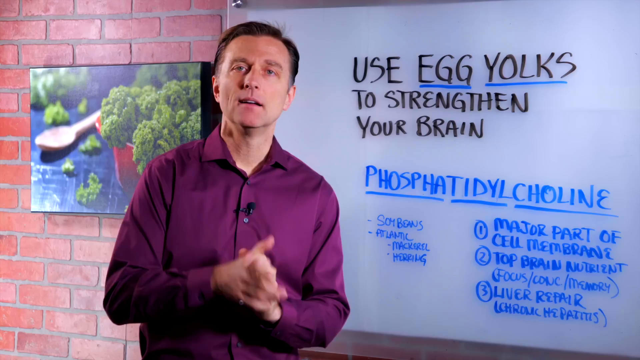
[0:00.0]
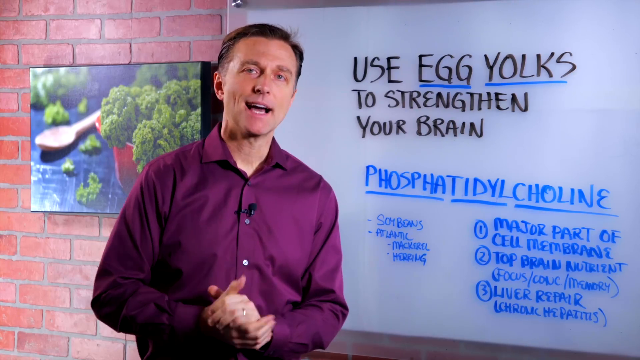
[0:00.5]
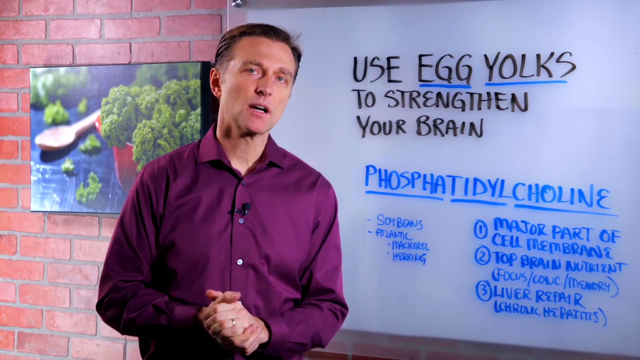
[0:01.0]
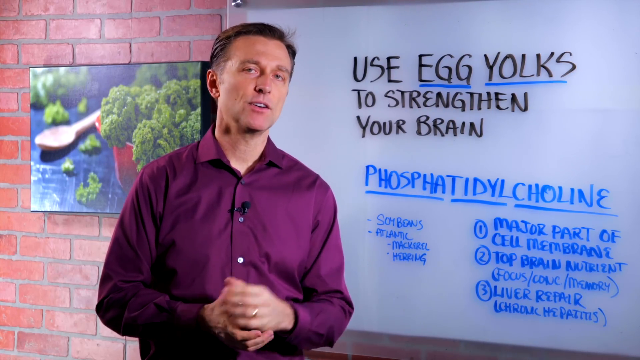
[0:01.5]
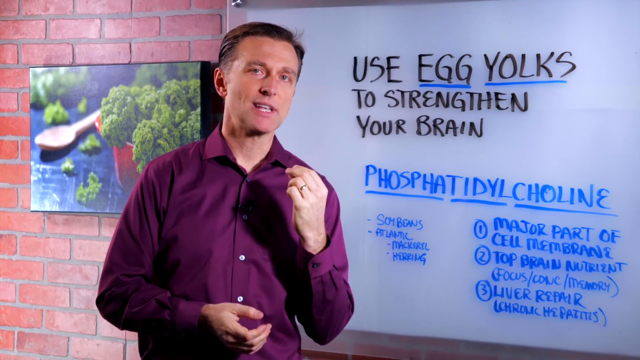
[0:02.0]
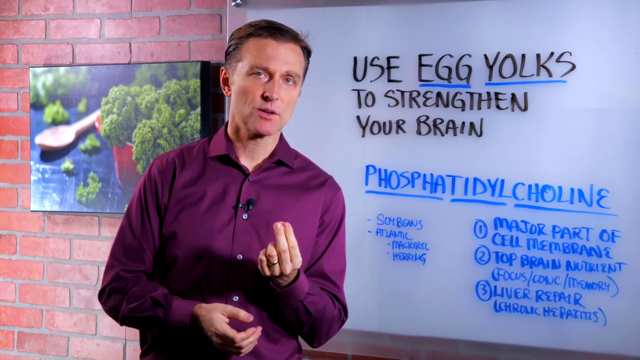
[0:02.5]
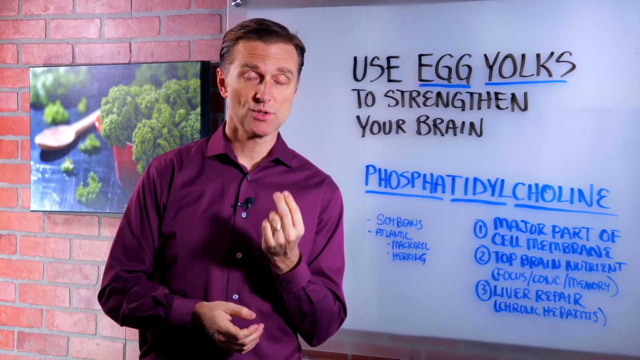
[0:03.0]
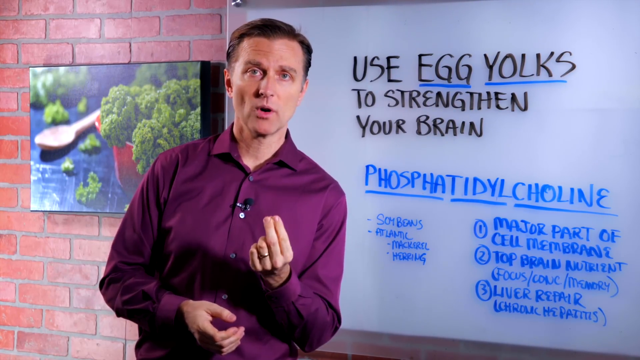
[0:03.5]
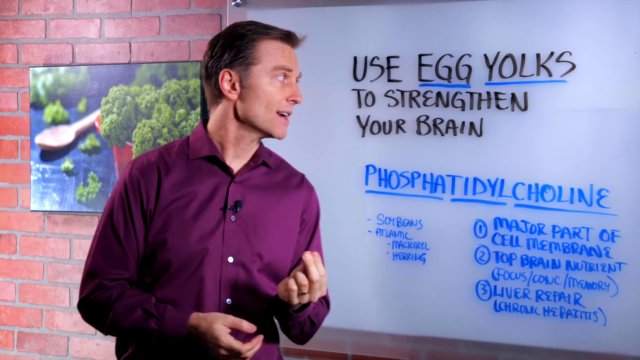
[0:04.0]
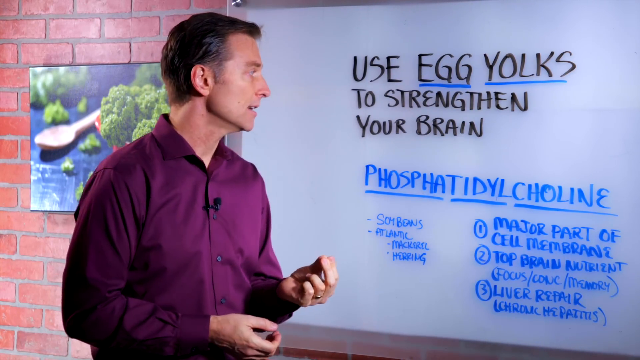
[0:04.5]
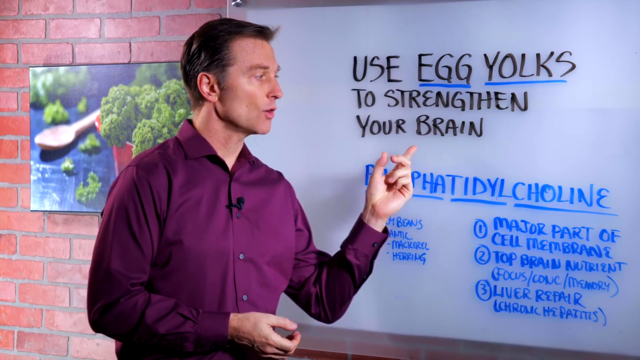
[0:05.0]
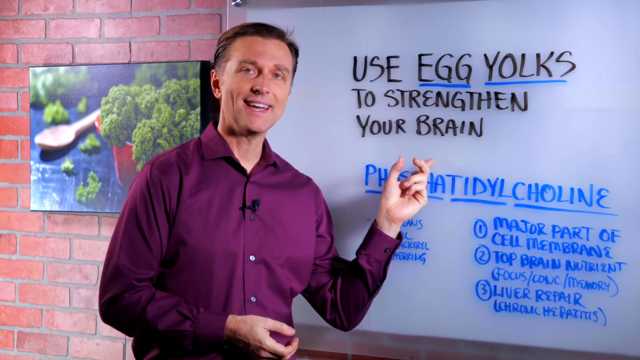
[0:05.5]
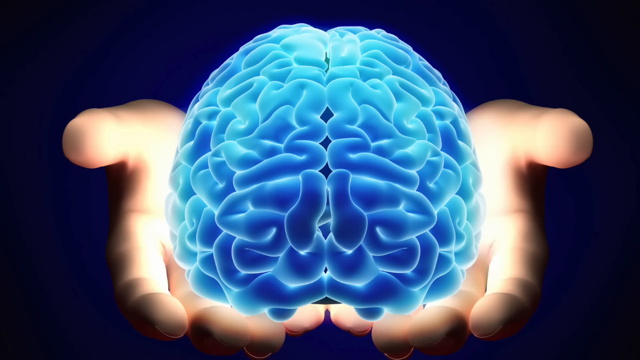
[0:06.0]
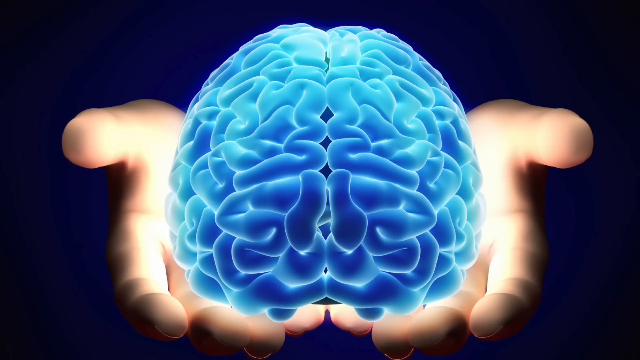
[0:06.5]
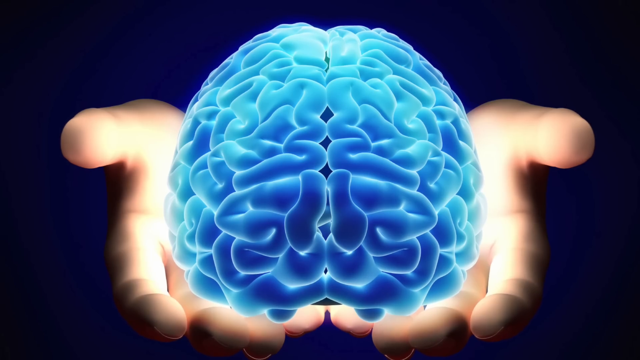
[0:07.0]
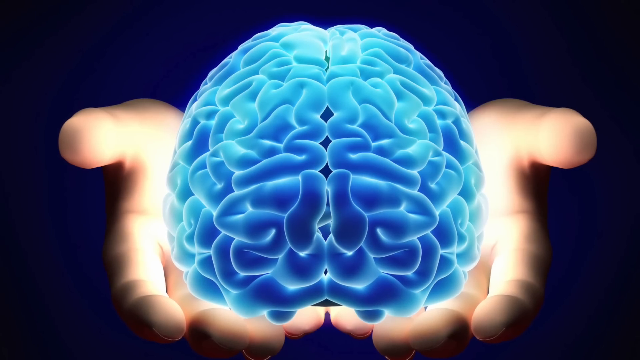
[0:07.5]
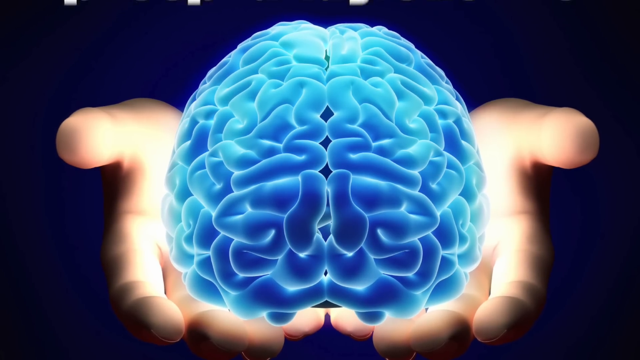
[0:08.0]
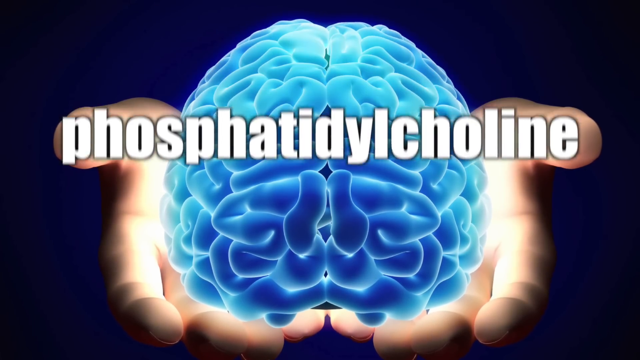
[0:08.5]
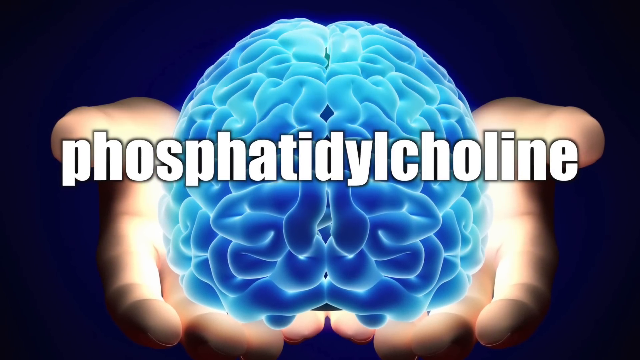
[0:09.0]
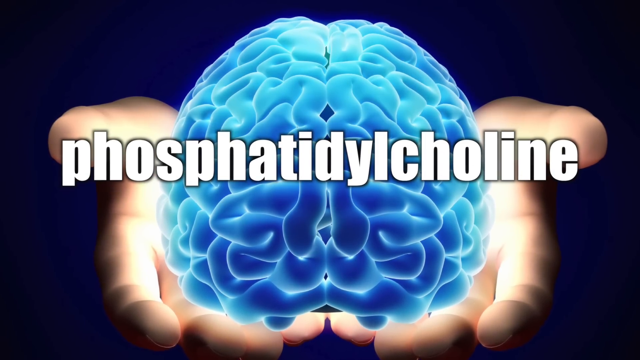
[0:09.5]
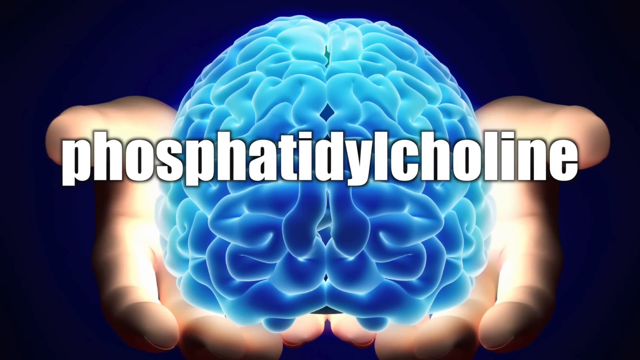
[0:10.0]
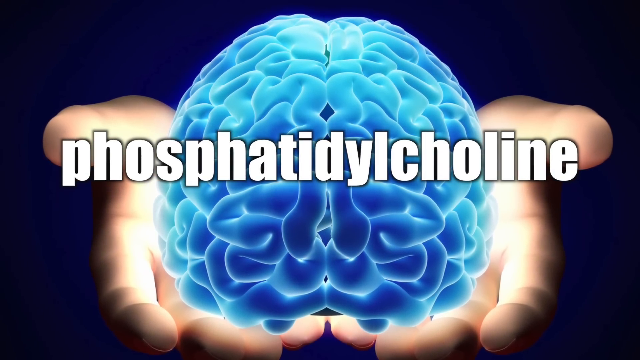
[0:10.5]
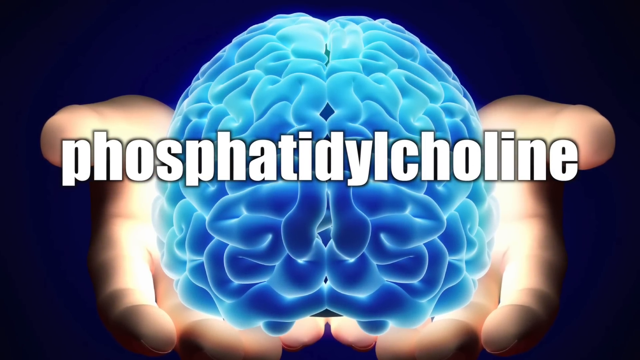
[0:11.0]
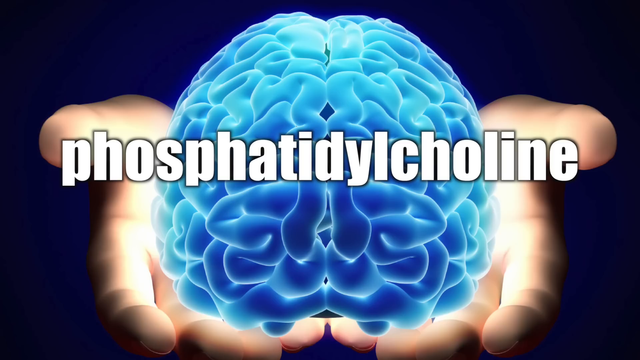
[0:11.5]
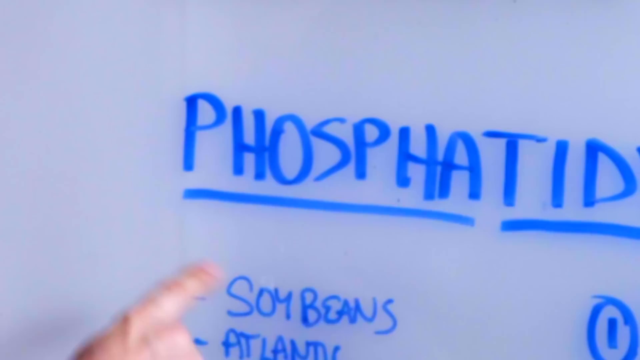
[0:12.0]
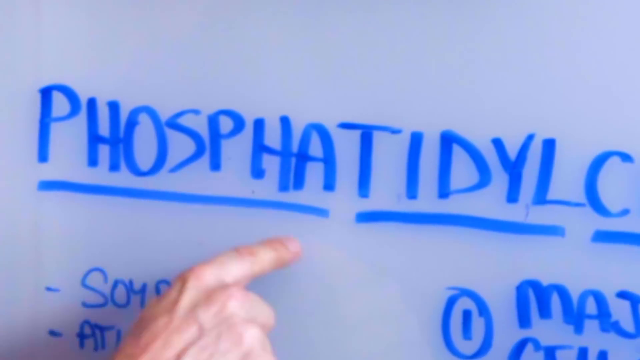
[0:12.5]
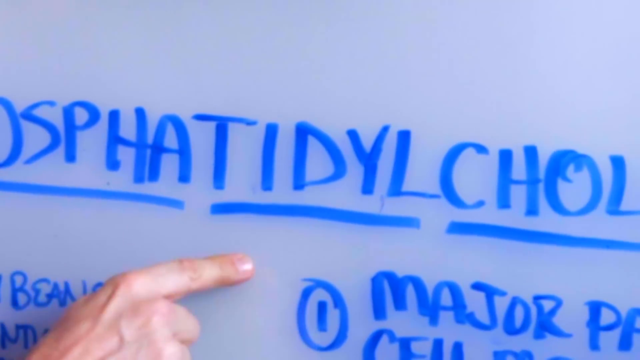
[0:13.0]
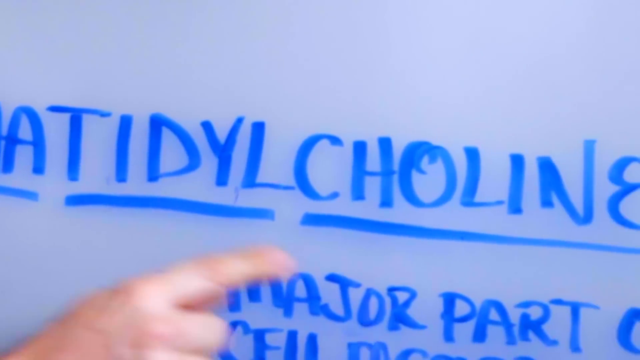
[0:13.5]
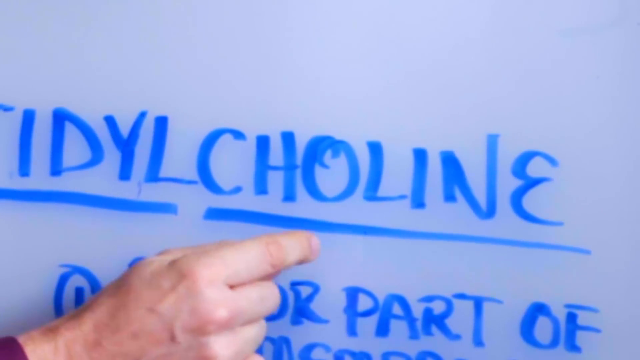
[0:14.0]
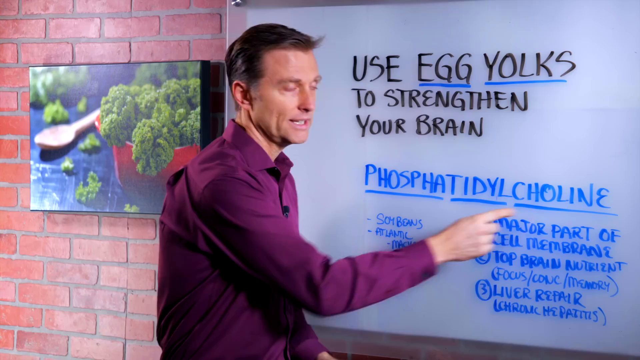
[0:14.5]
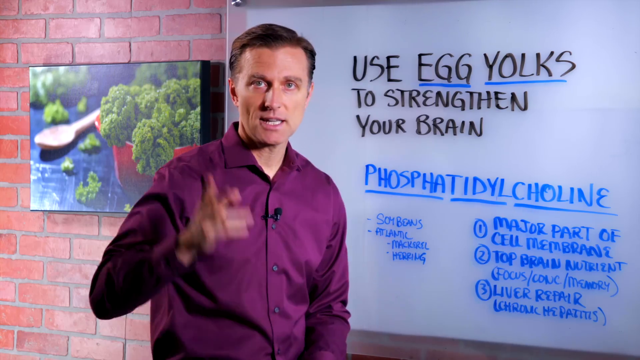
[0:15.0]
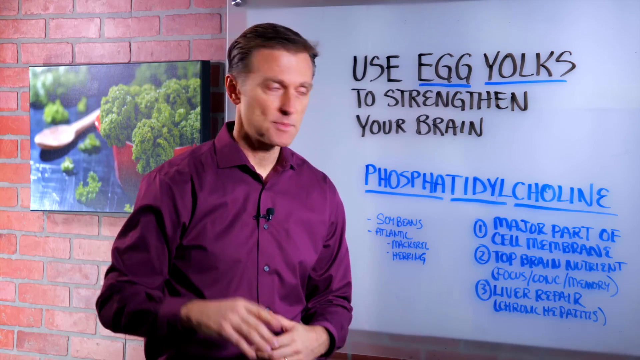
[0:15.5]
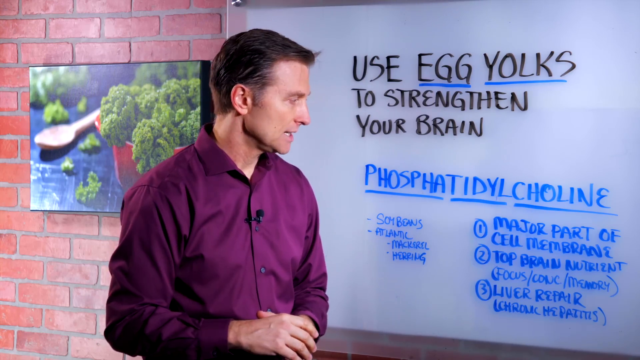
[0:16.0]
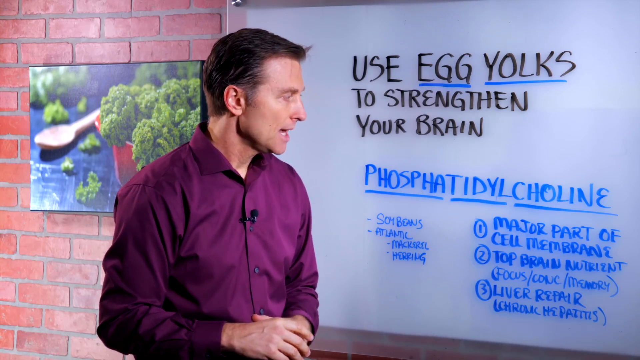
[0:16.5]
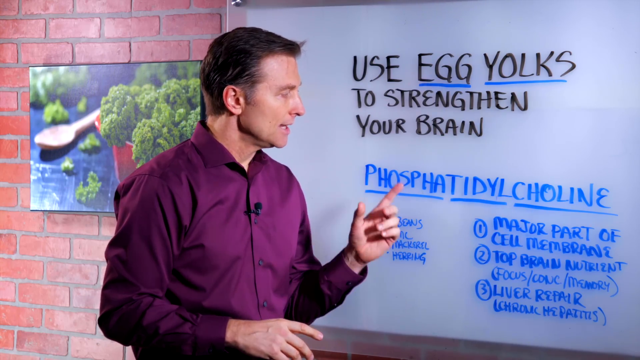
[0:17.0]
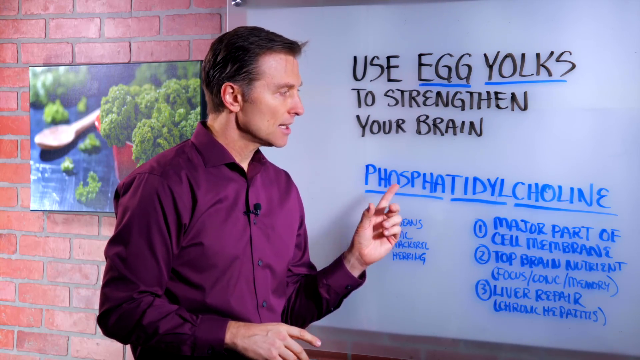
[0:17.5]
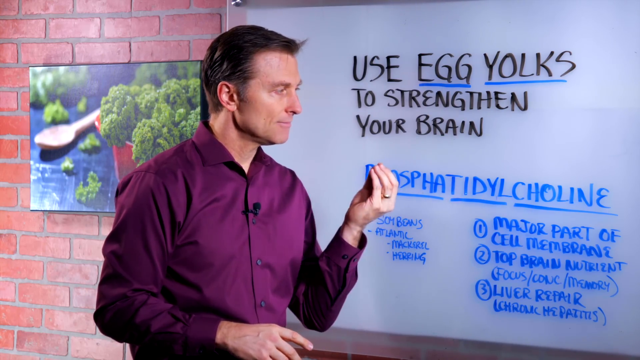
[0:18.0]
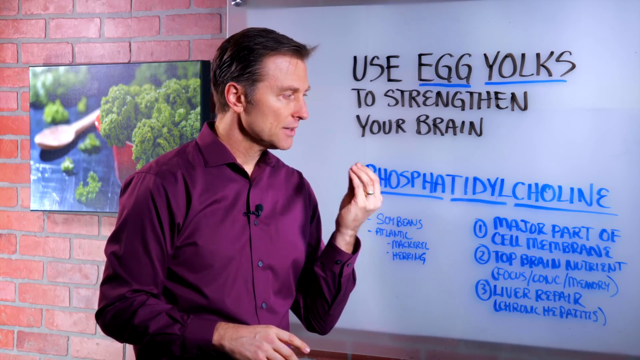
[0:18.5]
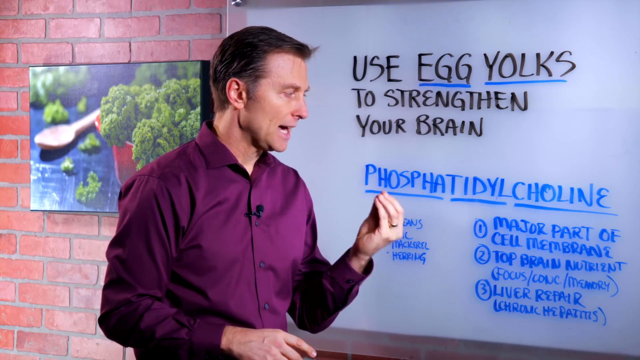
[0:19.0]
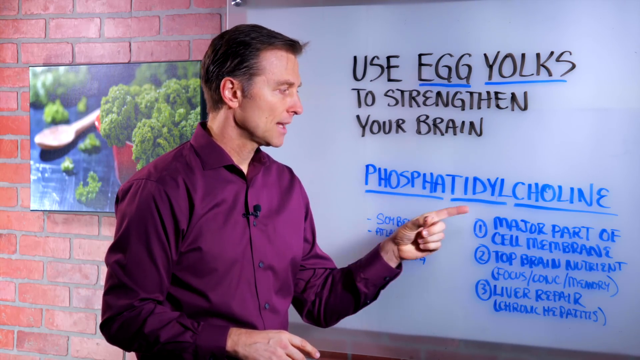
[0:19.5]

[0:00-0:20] A white Caucasian man, who appears to be American or British, lectures at a chalkboard. He is the only person in the video. The video switches between the man talking and still images and diagrams of egg yolks, phosphatidylcholine and the brain. The setting seems to be some sort of classroom, though it could be a soundstage designed to look like a classroom. The man wears a magenta button-down shirt tucked into slacks, with a belt.